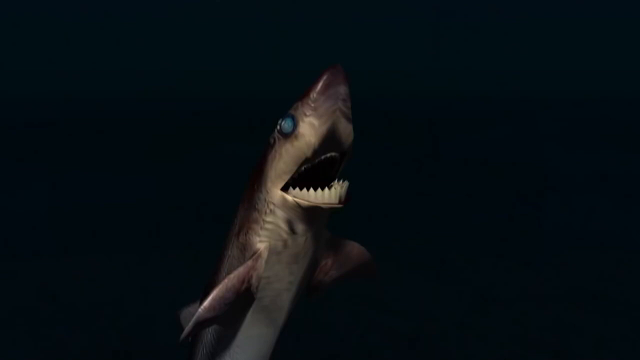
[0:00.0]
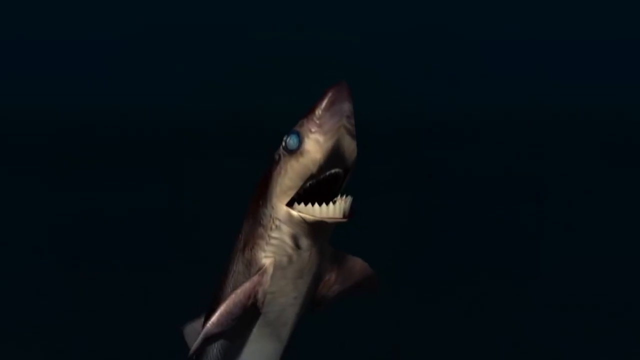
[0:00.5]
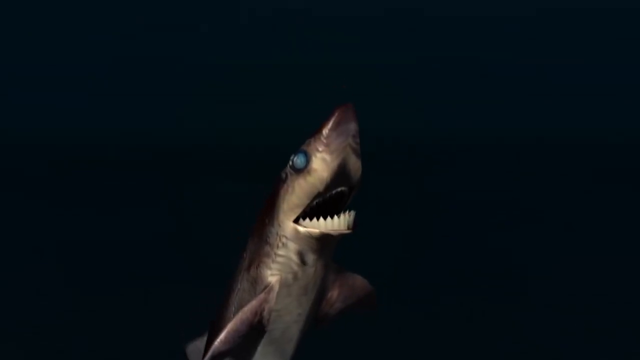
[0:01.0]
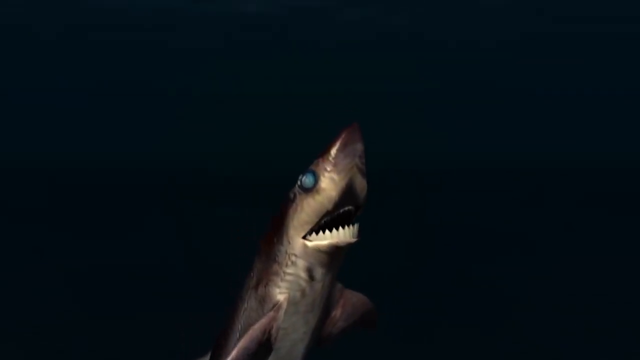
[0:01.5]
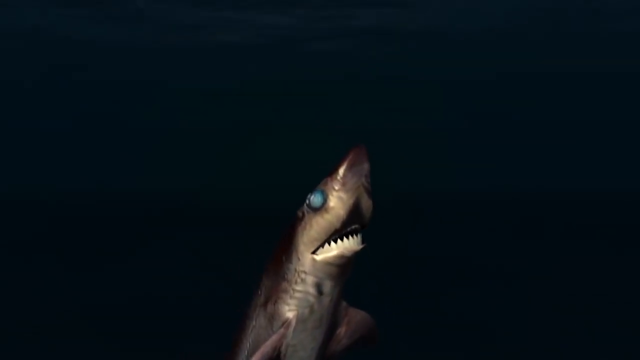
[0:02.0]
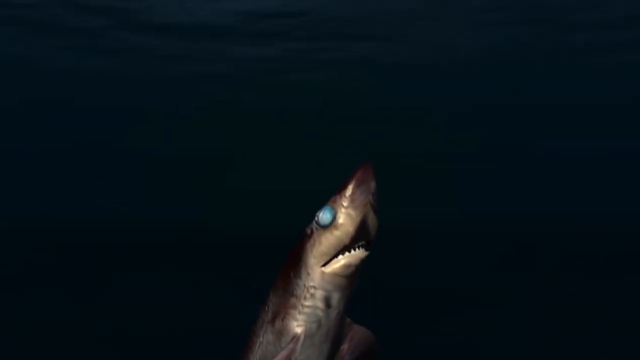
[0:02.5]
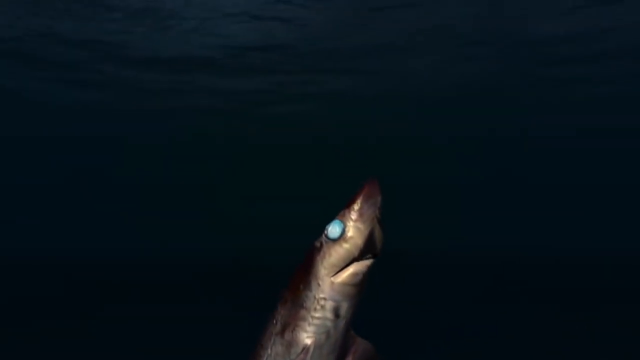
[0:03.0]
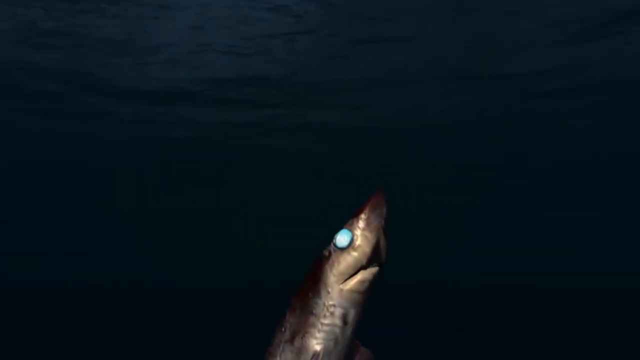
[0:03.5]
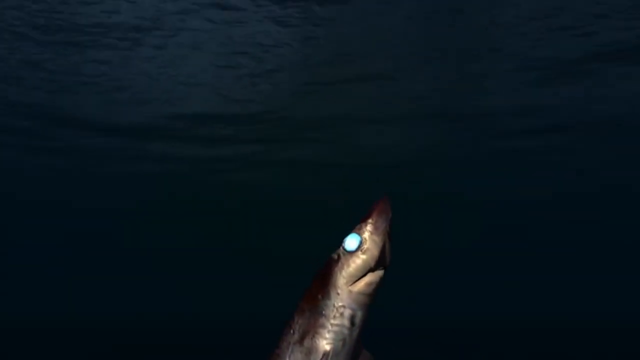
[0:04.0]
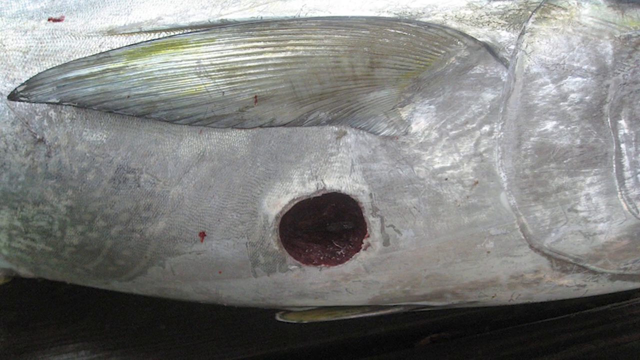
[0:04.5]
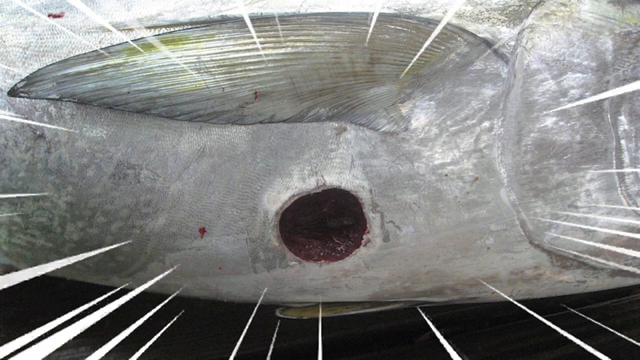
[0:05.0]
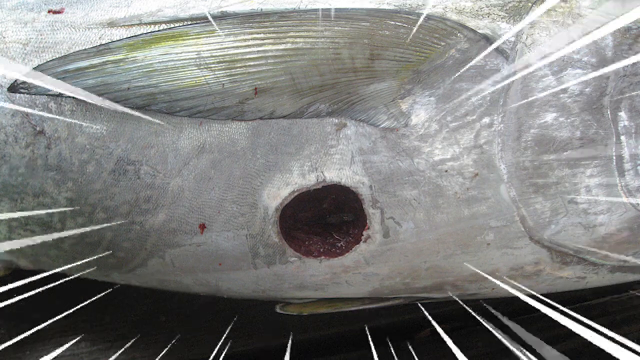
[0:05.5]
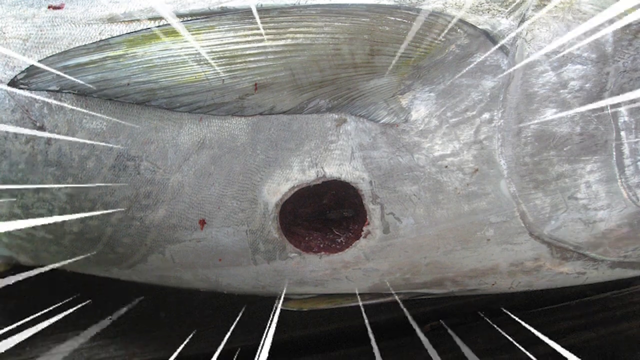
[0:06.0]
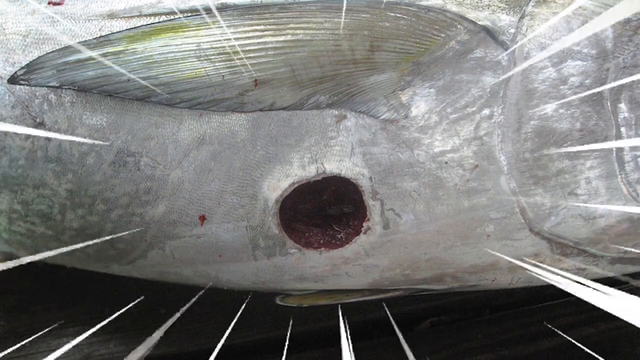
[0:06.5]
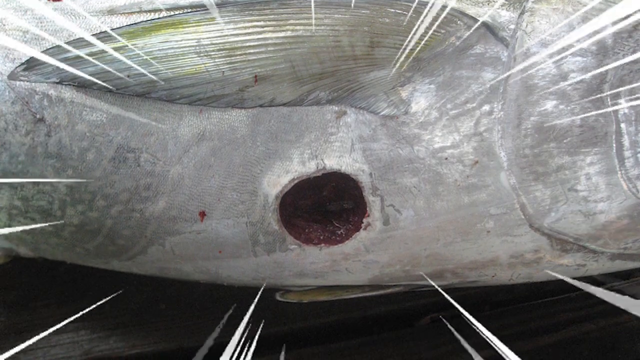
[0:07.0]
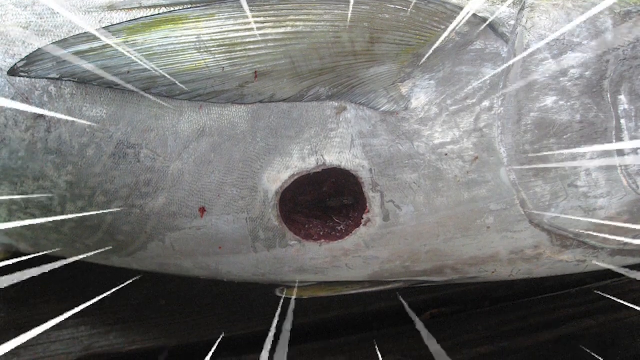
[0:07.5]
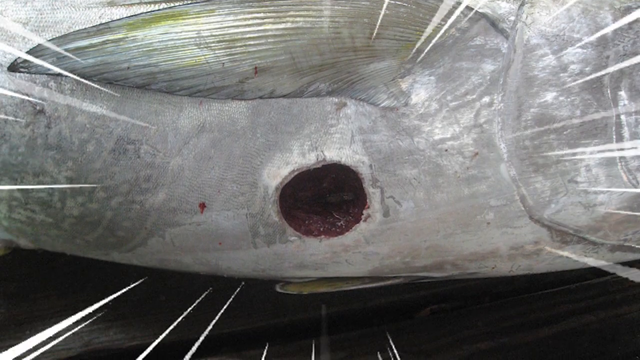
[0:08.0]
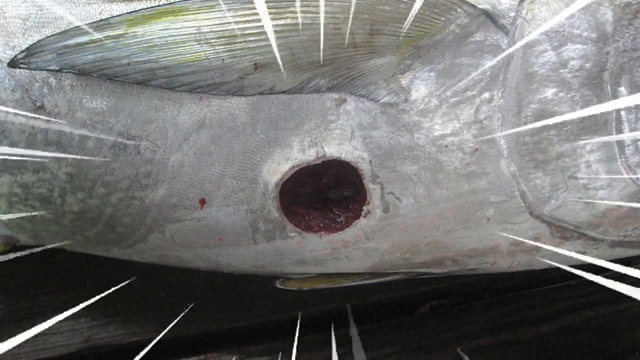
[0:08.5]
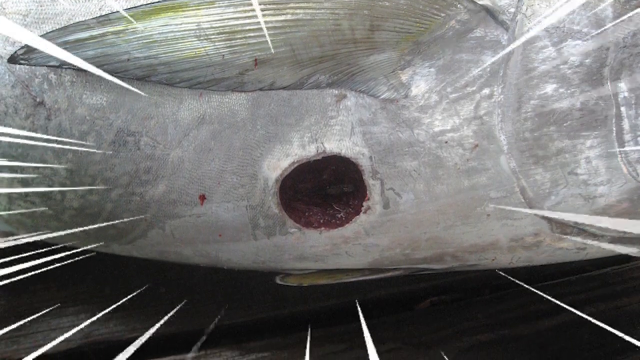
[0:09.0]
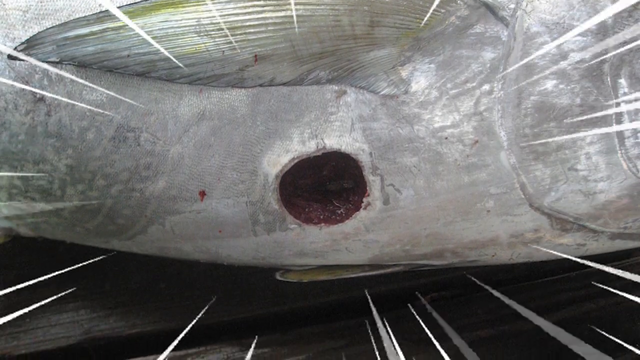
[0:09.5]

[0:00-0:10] A shark or fish that may be found in deep, dark parts of the ocean is shown. Its eyes seem to look different from those of a regular shark or fish, with a milky look. It also seems to have perfectly shaped, razor-sharp teeth.